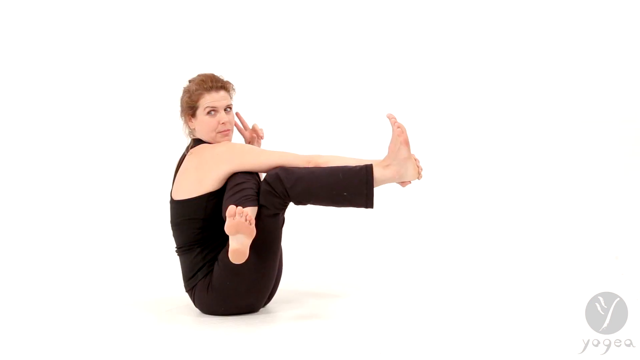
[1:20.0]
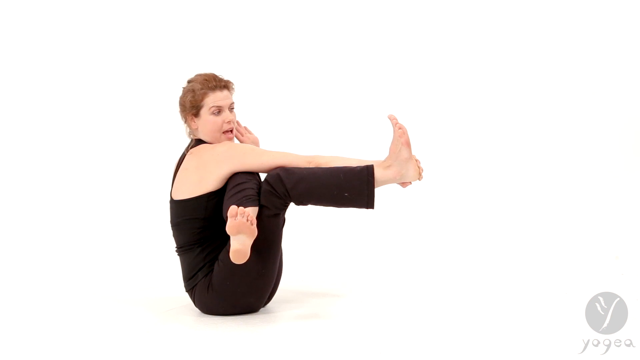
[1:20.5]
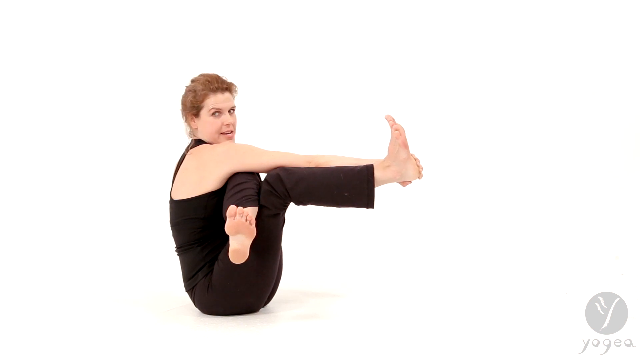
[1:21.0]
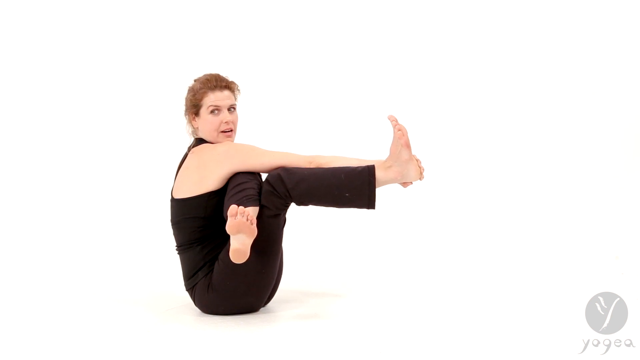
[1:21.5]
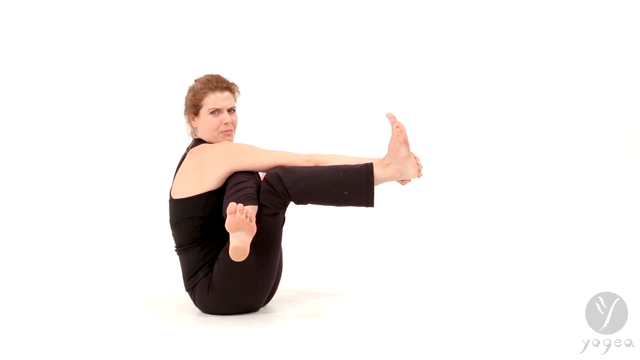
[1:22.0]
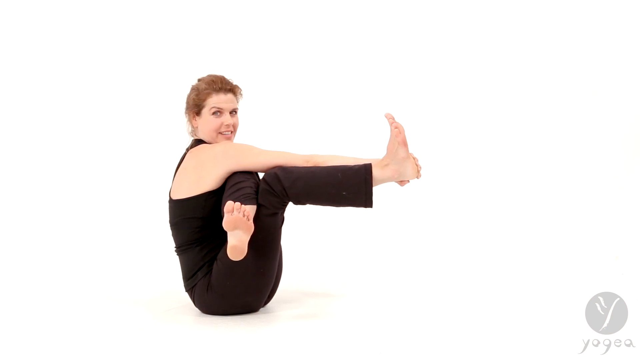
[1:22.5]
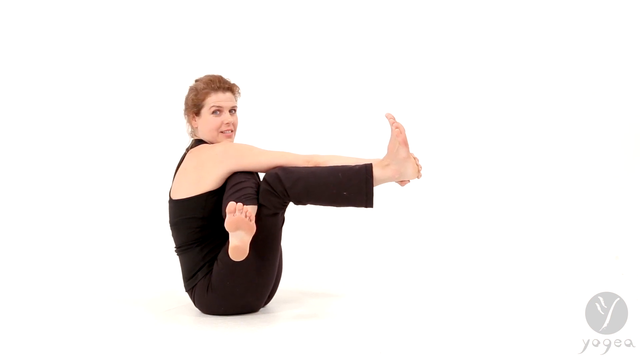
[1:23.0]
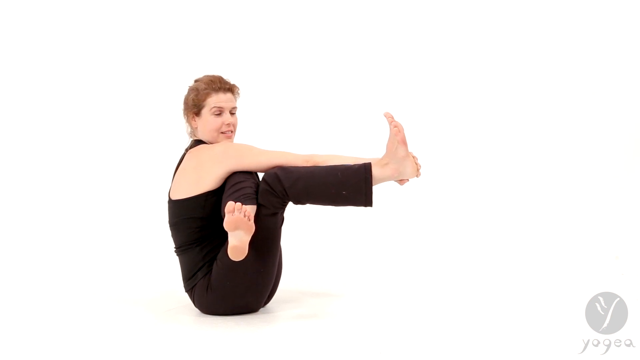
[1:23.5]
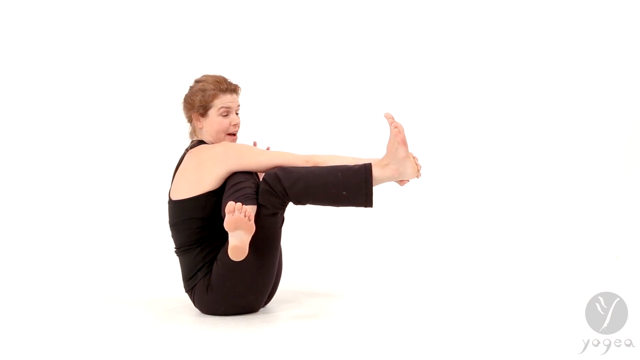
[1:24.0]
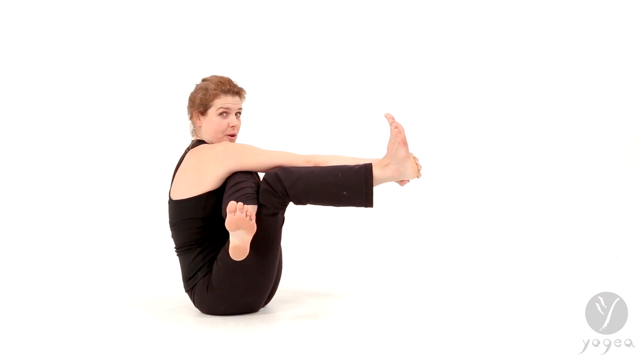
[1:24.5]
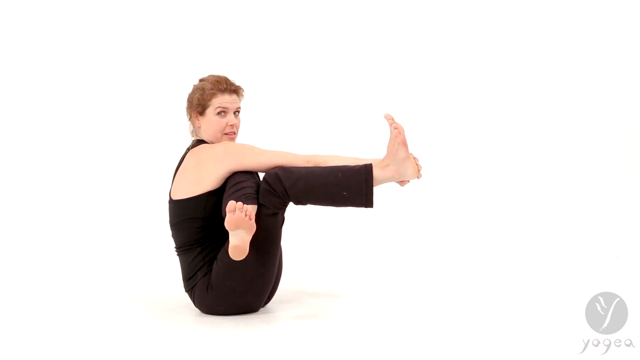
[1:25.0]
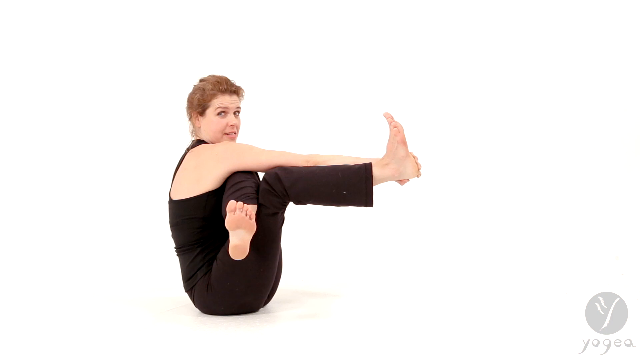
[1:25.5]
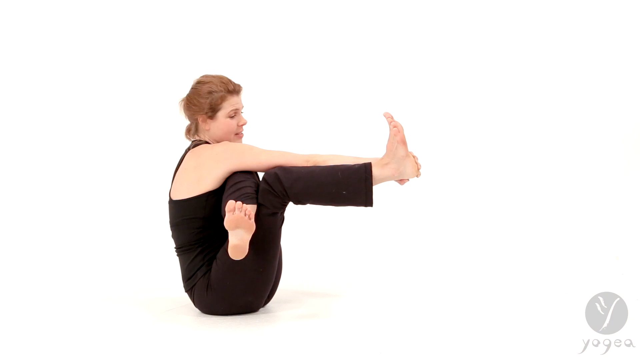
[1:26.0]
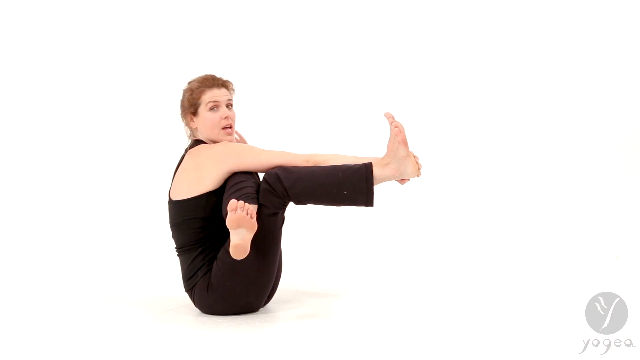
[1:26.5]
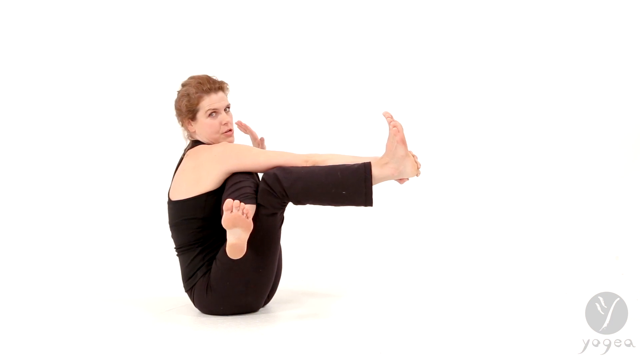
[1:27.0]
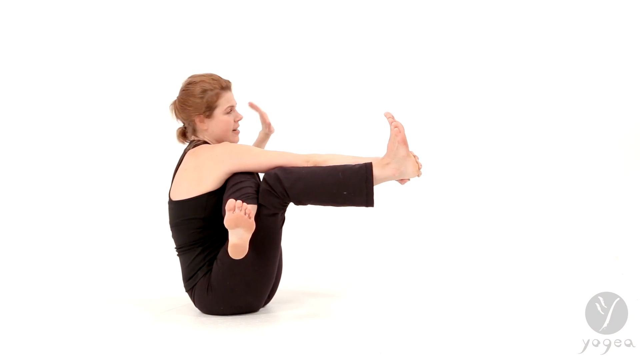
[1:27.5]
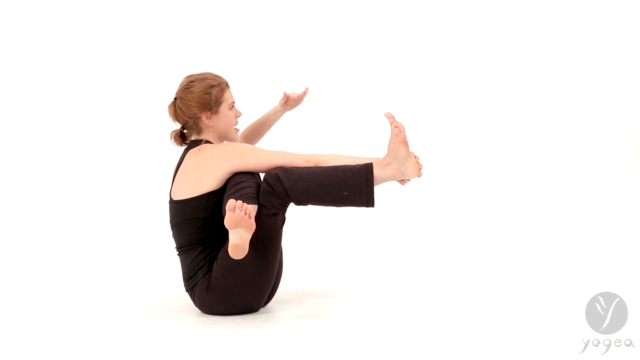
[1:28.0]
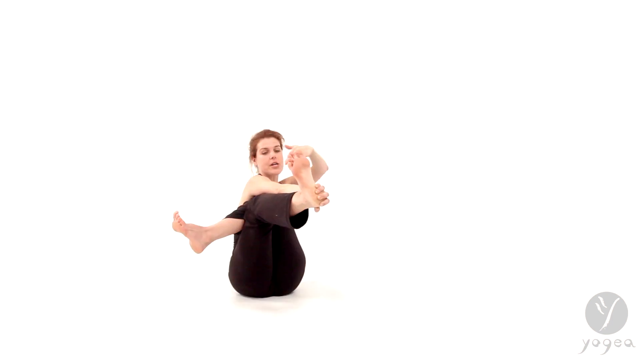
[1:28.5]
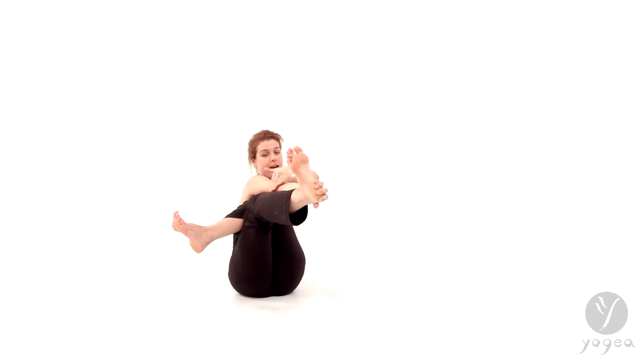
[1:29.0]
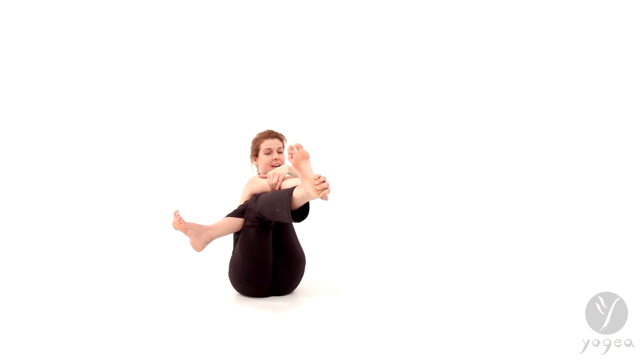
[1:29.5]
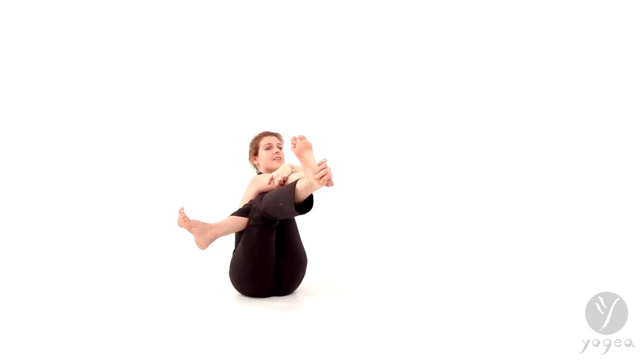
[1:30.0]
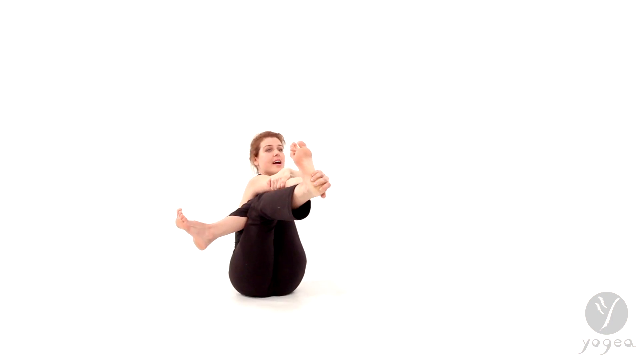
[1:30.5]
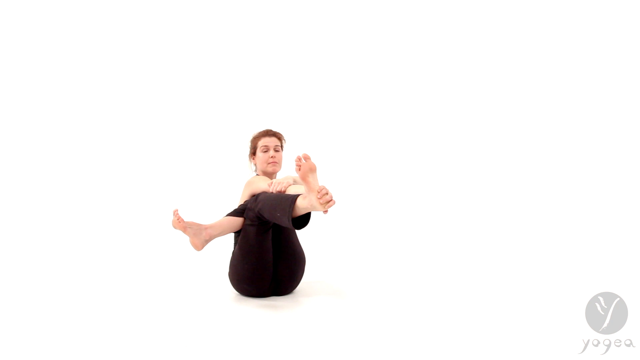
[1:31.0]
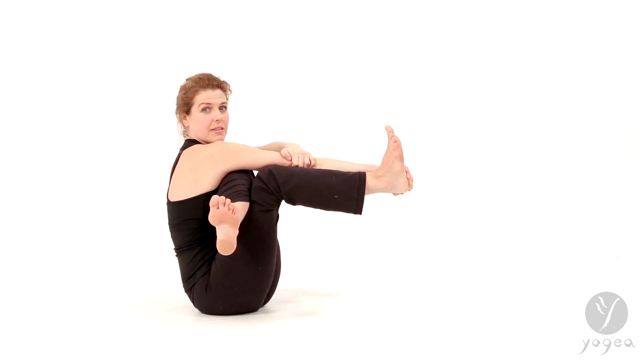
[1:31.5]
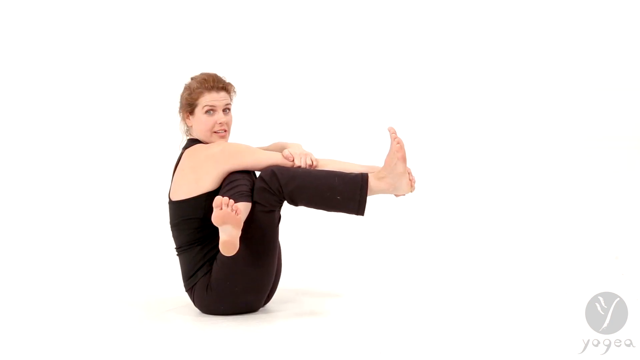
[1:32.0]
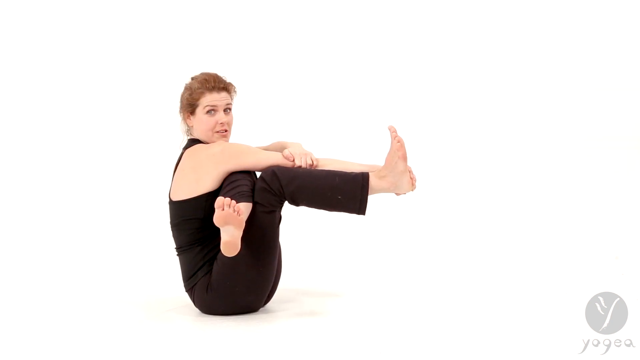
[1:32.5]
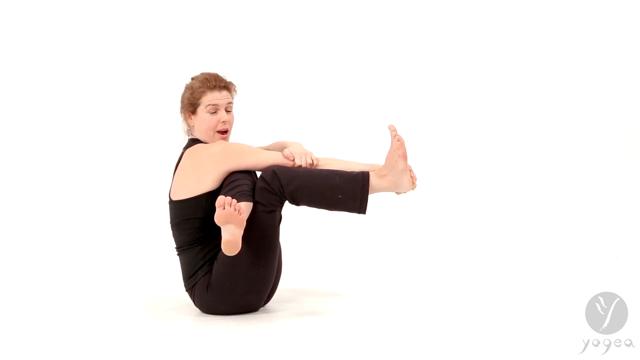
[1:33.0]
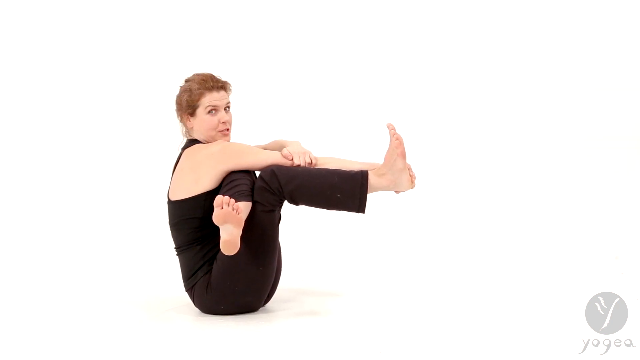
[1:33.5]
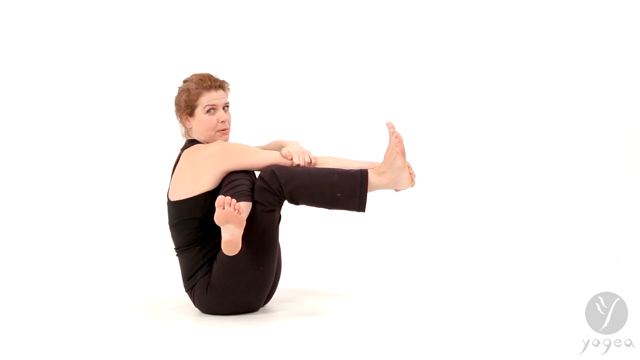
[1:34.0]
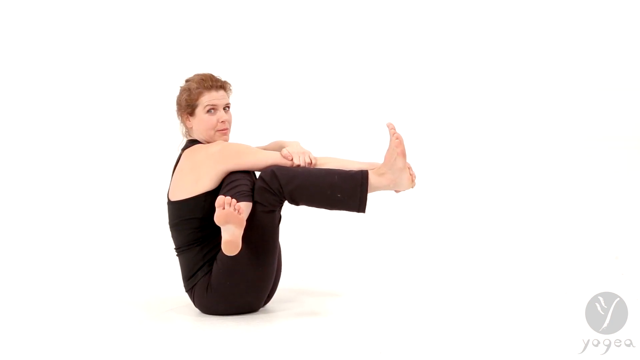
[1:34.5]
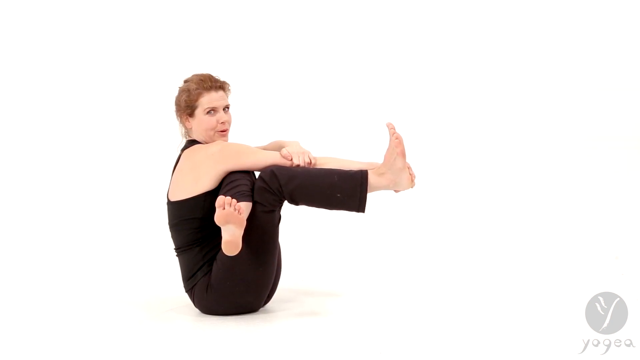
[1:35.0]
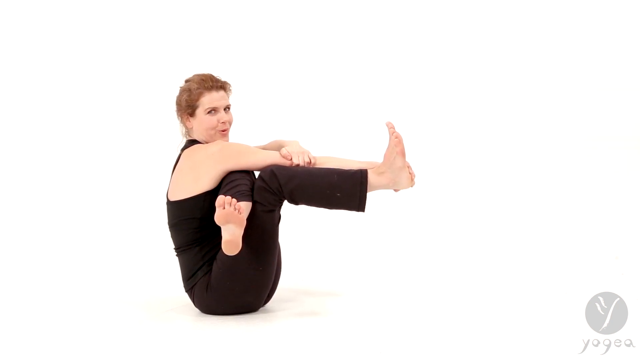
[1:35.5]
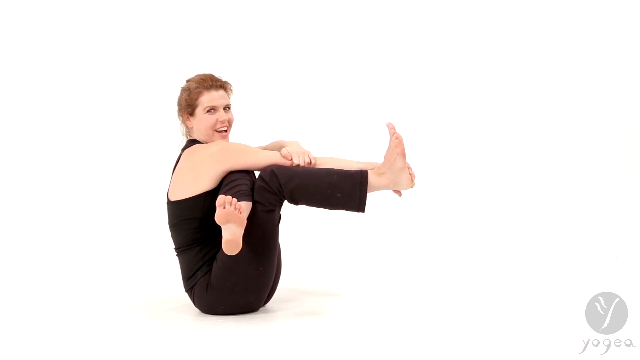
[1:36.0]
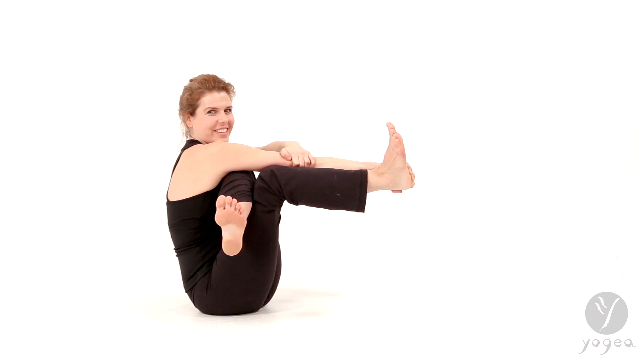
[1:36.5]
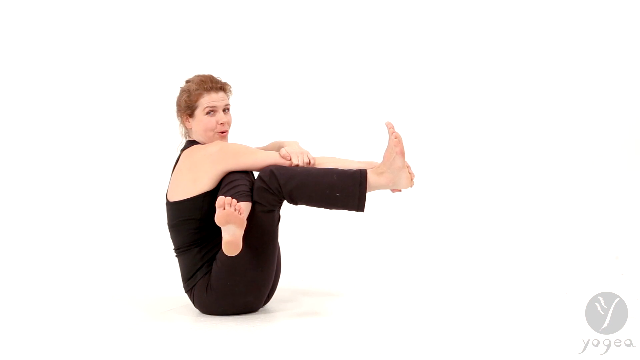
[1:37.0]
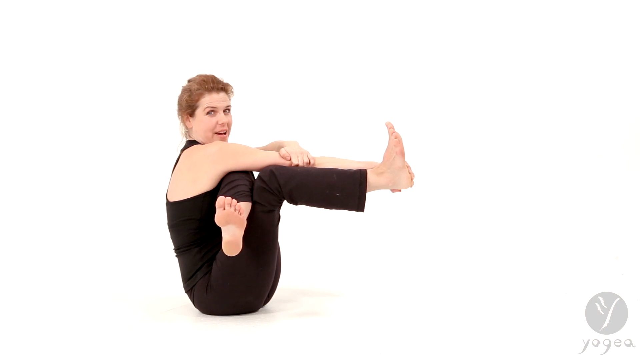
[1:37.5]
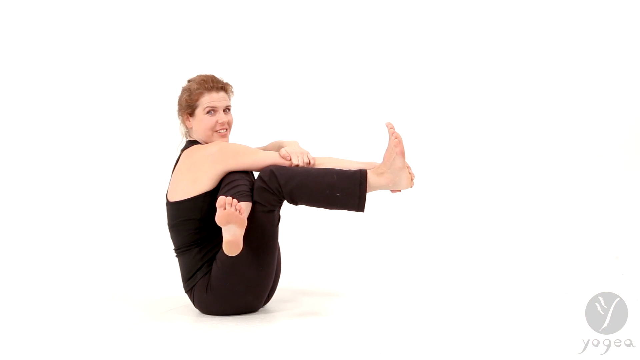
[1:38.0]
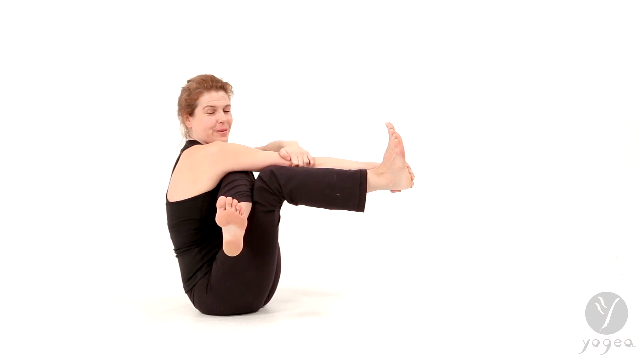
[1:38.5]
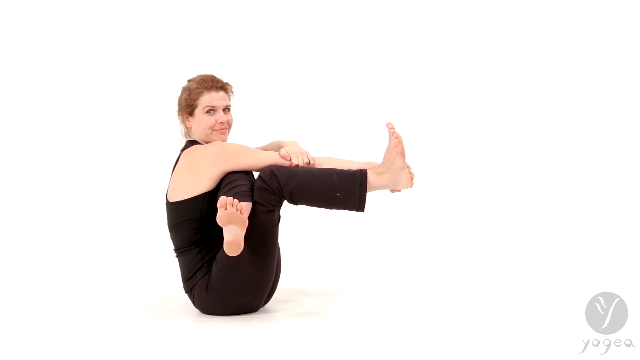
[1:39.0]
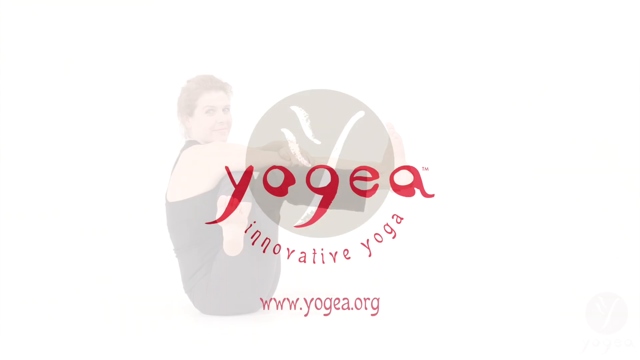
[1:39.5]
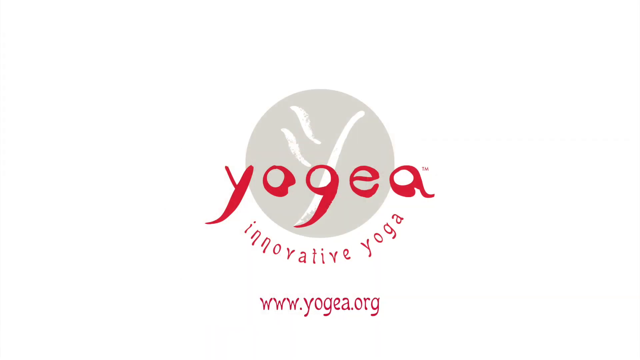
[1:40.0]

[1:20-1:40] The yoga instructor sits in a pose with her right arm holding her right foot from the inside, the foot raised parallel to her arm and her legs stretched out from her chest. Her left leg sticks through the gap between her chest and her right leg, pushed through by her left arm, so the sole of her left foot faces the camera. Her left hand is stretched towards her face. She continues to talk to the camera and smiles while maintaining the hold. She flexes her left hand, raises it and dips it down so that she holds her right elbow with her left hand, while her right hand still holds her right foot. She maintains this pose while she speaks, her left leg still sticking through the gap between her chest and her right knee. A white title page then appears with the grey circle bearing the Y with the extra small line above the small line of the Y, the red writing "Yogea", and "Innovative Yoga" in red underneath the circle. Below this is "www.yogea.org", and the video ends.